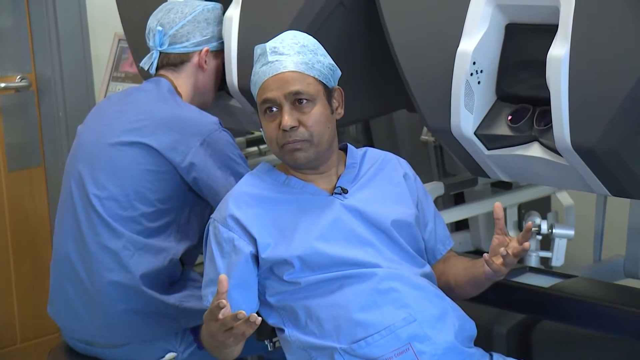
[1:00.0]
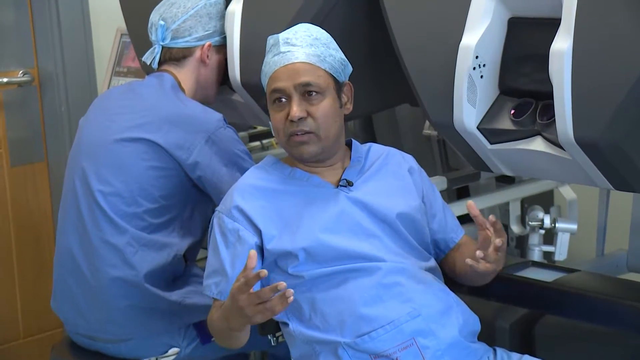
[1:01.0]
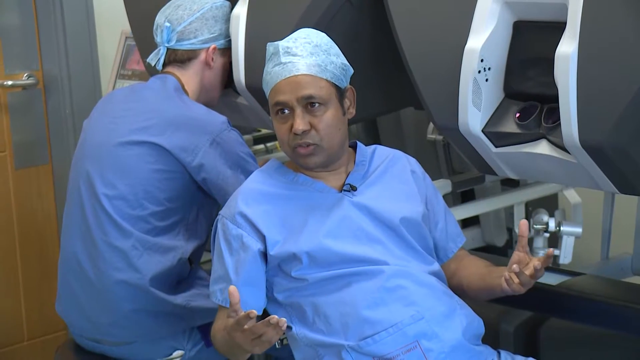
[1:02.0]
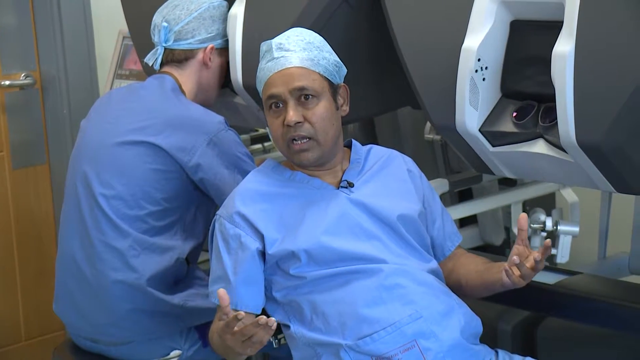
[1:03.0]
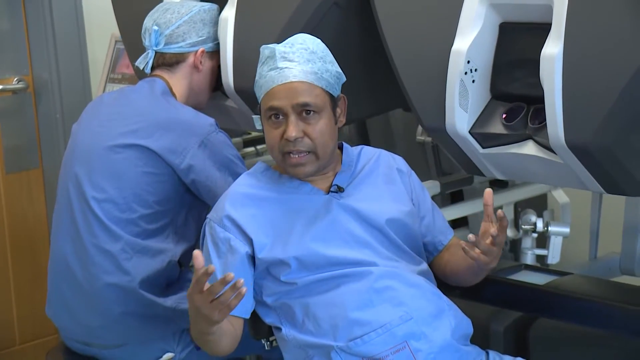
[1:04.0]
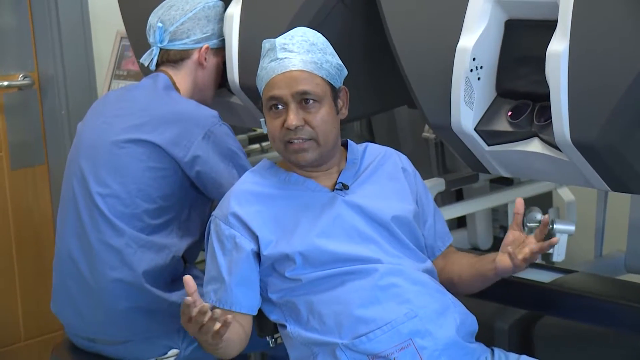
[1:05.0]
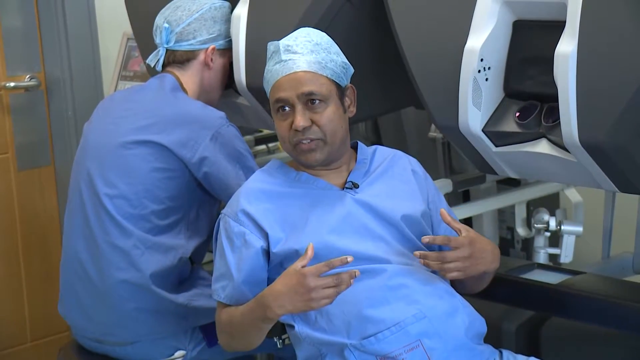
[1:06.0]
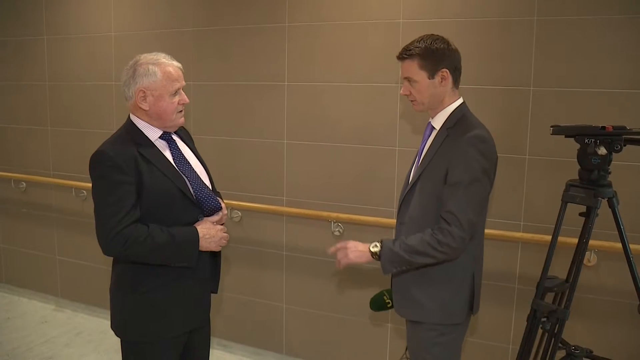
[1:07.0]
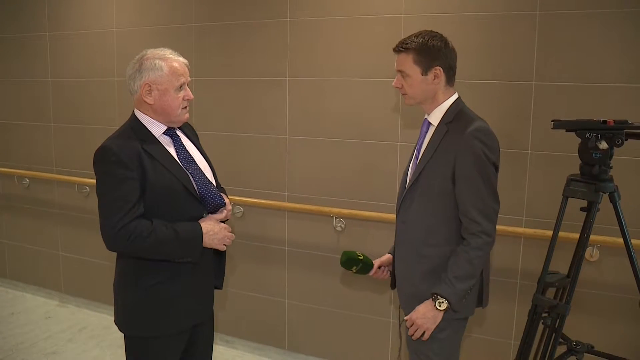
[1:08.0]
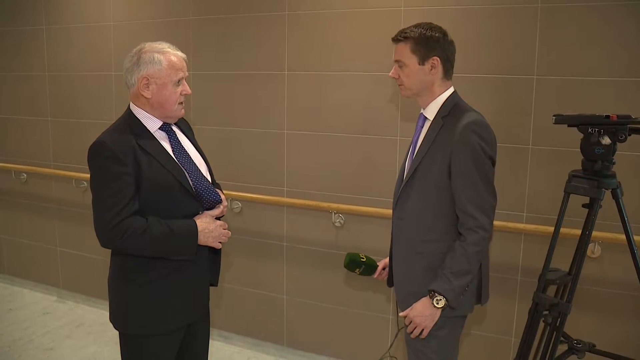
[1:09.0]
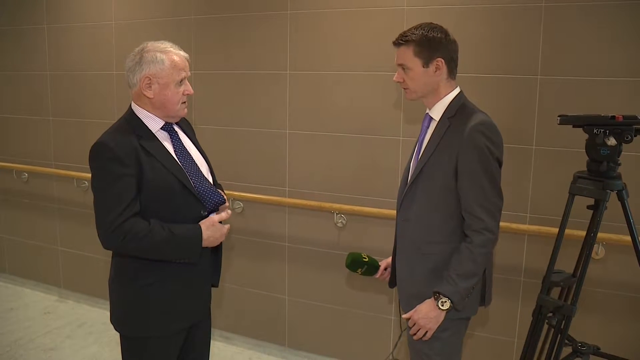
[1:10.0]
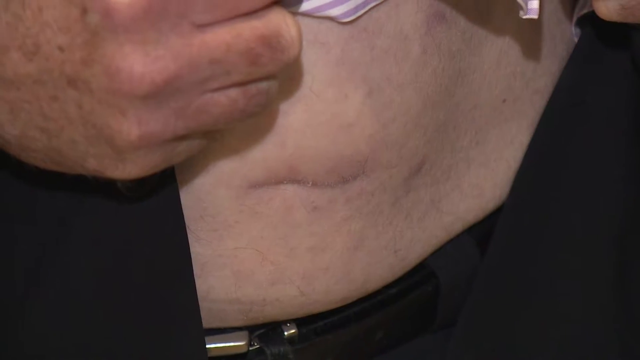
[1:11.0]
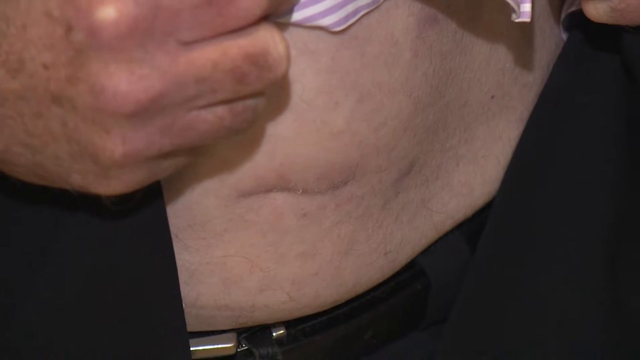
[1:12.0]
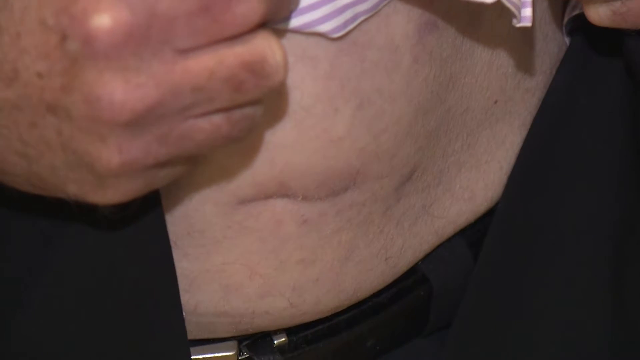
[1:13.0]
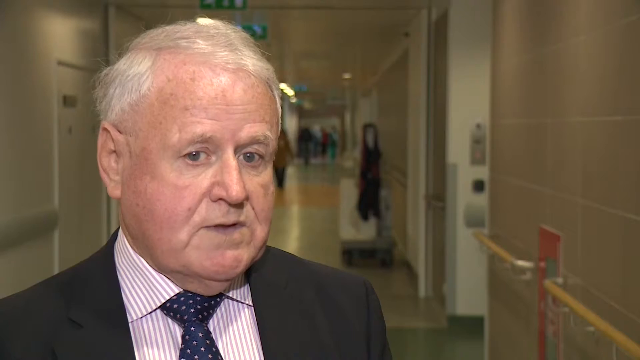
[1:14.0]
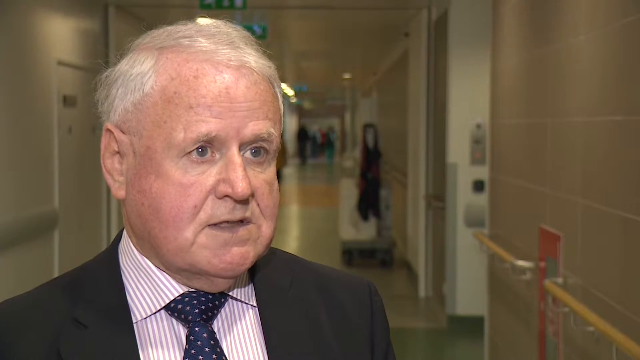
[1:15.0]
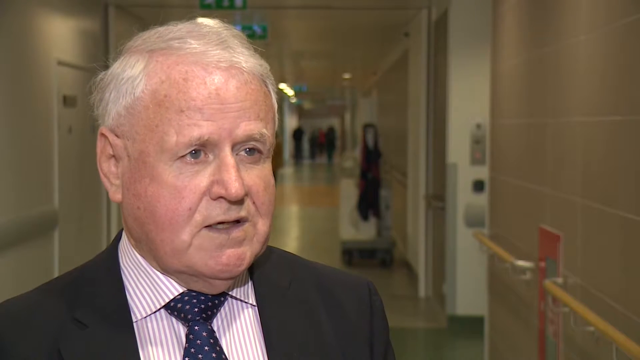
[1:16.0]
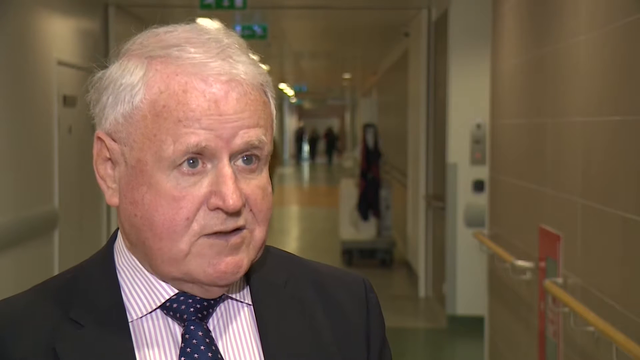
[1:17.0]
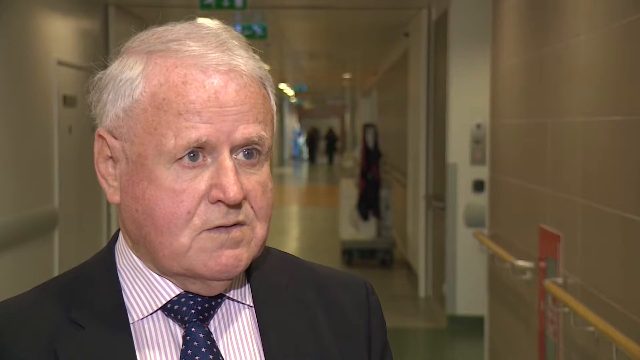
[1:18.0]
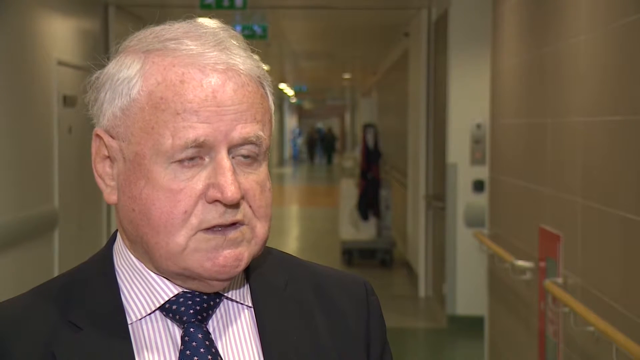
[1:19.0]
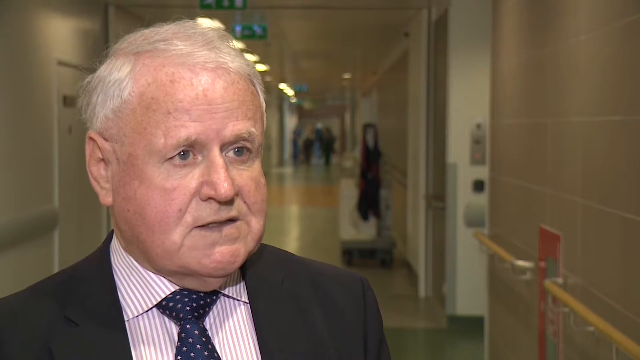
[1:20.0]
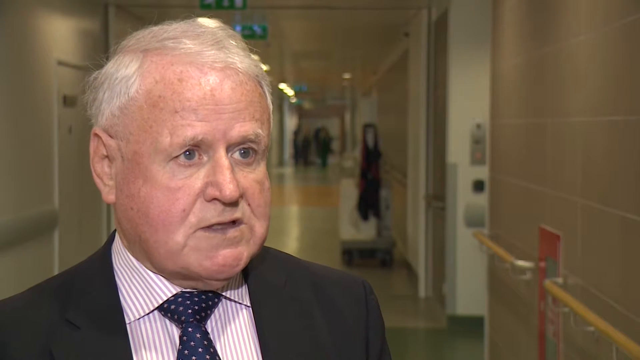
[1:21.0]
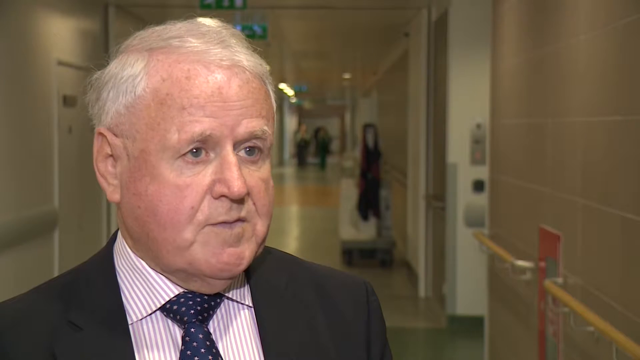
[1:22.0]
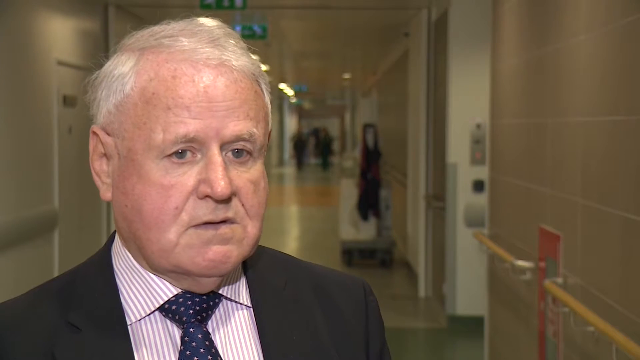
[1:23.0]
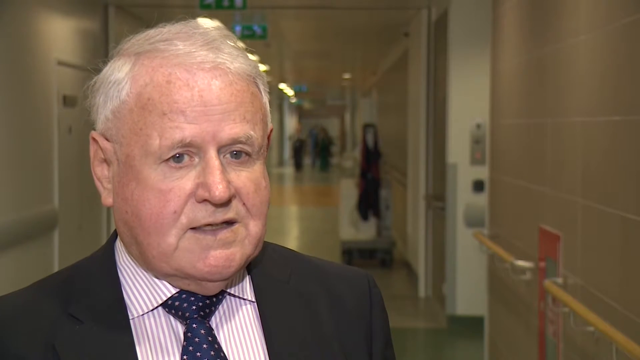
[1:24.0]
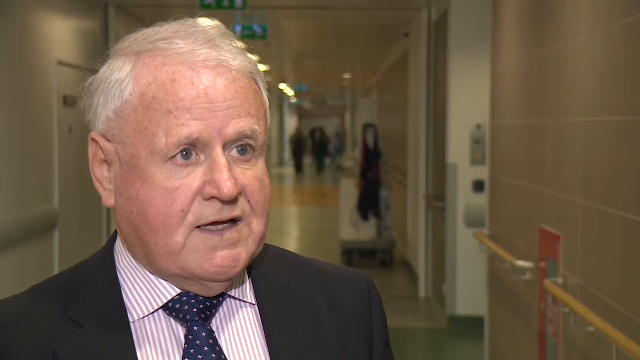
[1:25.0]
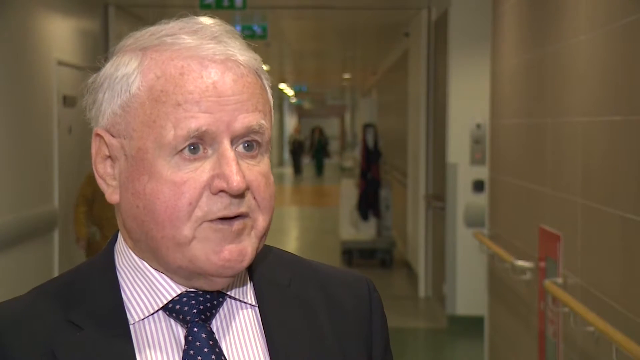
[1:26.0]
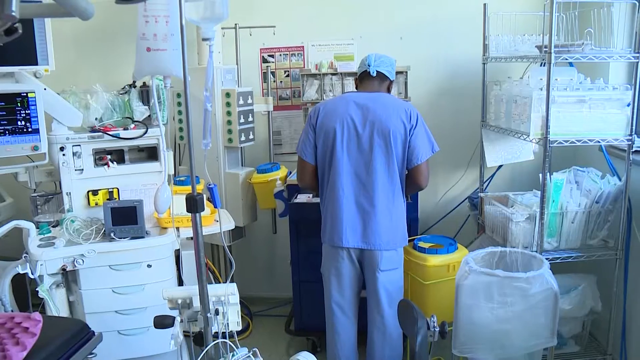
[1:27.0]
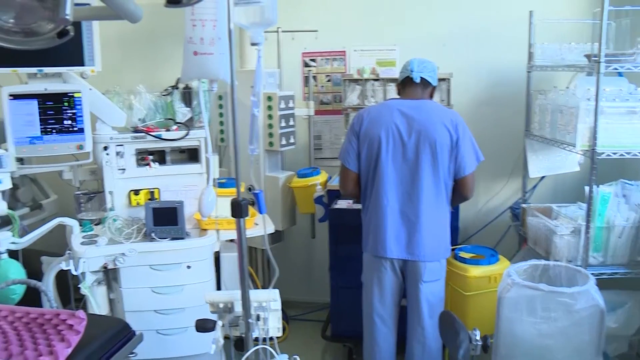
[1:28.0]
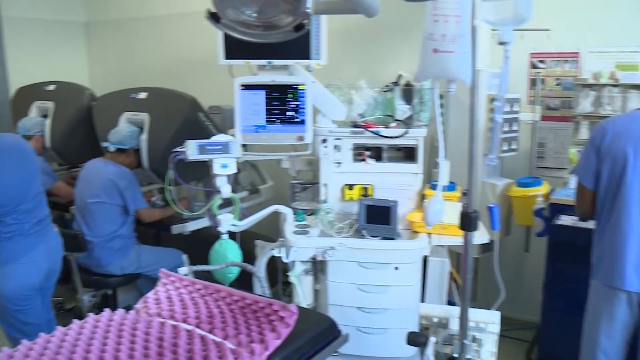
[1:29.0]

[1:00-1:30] Two medical professionals sit in a room, both in blue scrubs and blue caps. The one on the left has his face buried in the monitor of a machine used to practice operating the machines, while the one on the right has turned around in his chair and faces left over his shoulder toward the camera people. The one on the right continues to speak, raising his arms to emphasize his points. Next, two men in suits stand together in a hallway, with a gray brick wall behind them and a brown handrail. On the right side of the frame is a black camcorder pod or stand. The man on the left has blonde hair; the man on the right has dark hair and holds a microphone. The man on the left speaks while the man on the right mostly nods and listens. A close-up then shows a scar on the stomach of a man raising his shirt, followed by a close-up of the man standing, with a hospital in the background, as he talks to the viewer in a very calm manner. The scene switches to a medical professional in blue scrubs and a blue cap in a lab or medical office, hunched over a desk; as the camera pans to the left, several other medical professionals come into view.